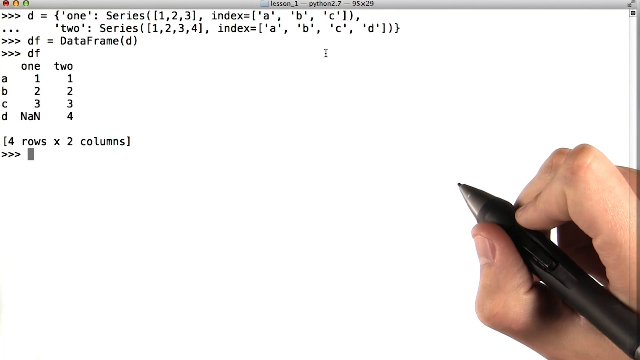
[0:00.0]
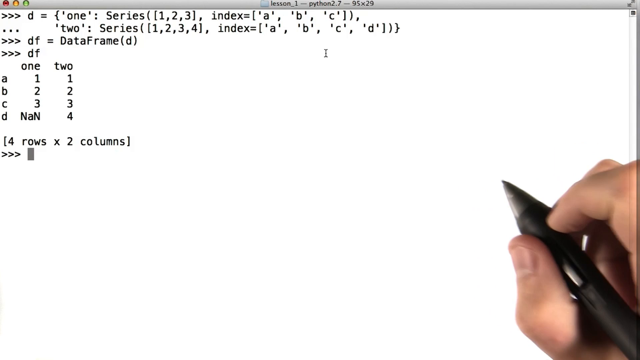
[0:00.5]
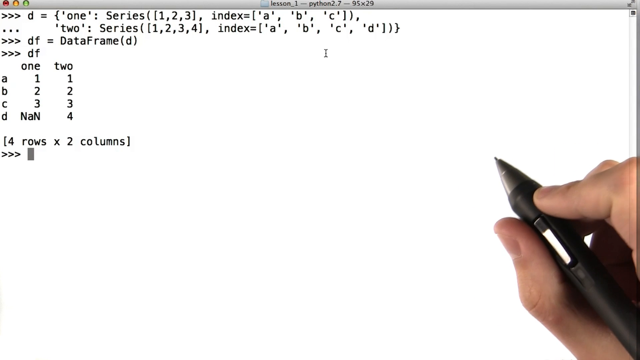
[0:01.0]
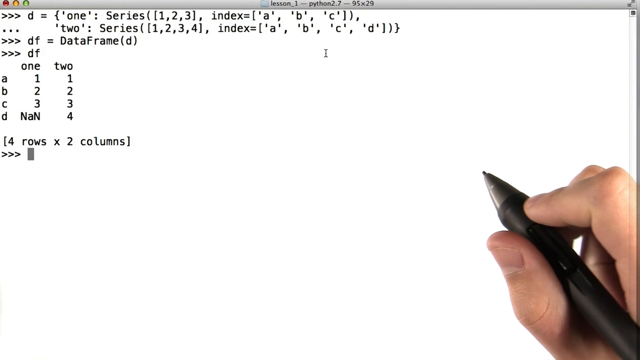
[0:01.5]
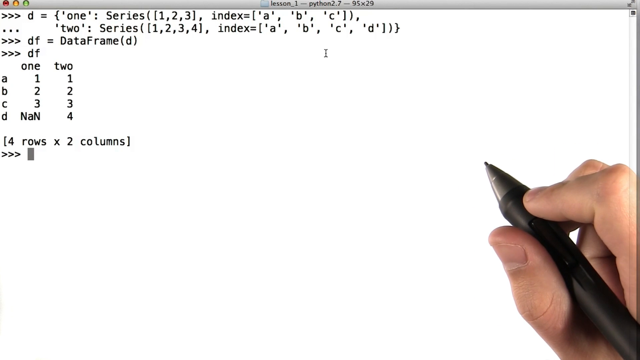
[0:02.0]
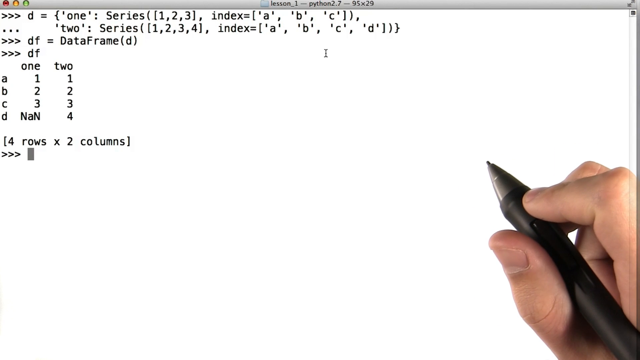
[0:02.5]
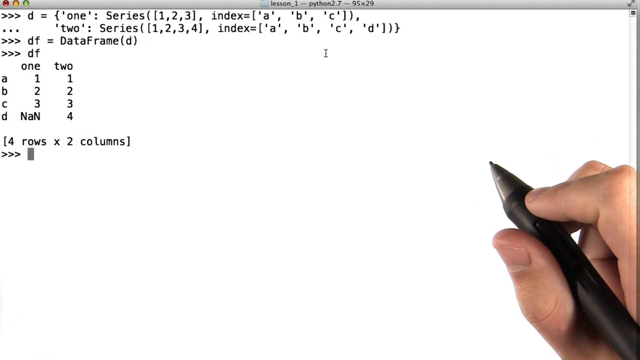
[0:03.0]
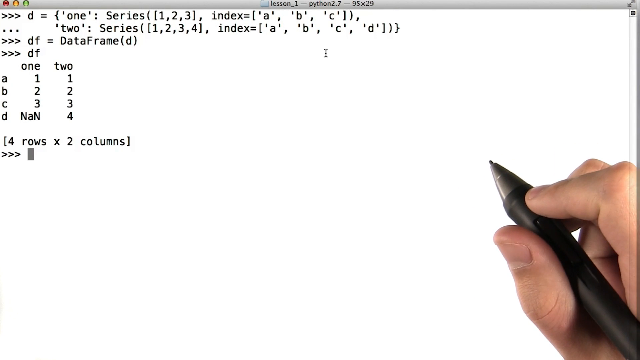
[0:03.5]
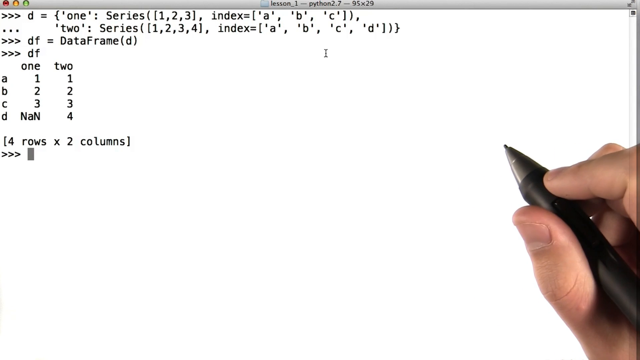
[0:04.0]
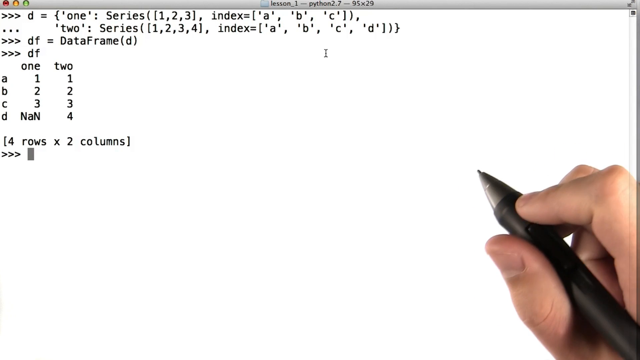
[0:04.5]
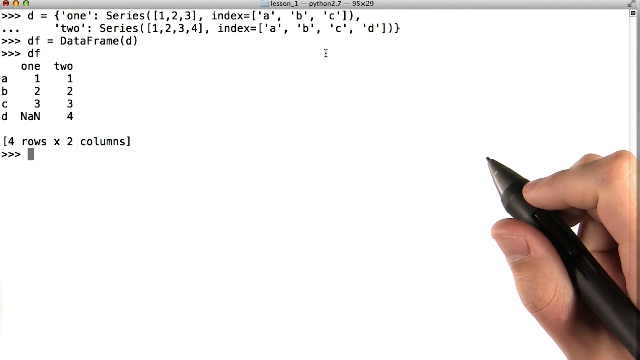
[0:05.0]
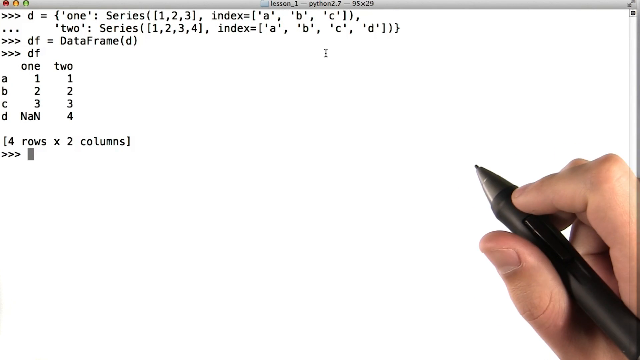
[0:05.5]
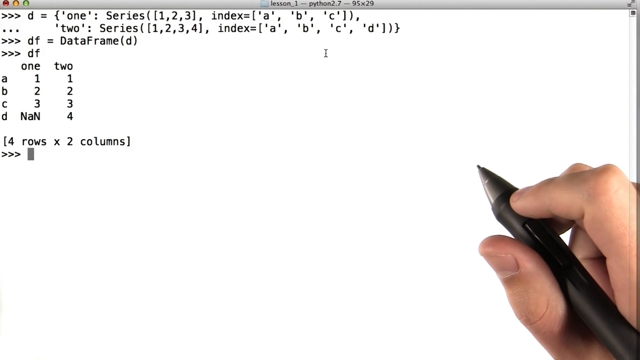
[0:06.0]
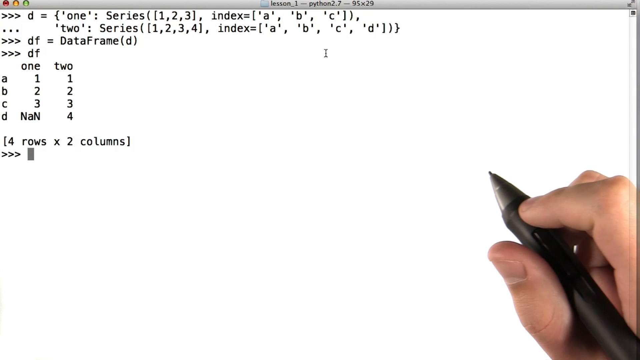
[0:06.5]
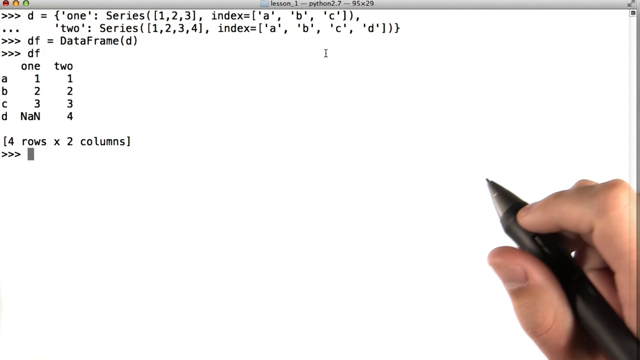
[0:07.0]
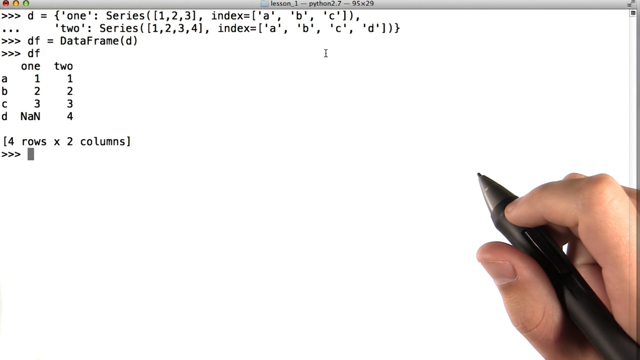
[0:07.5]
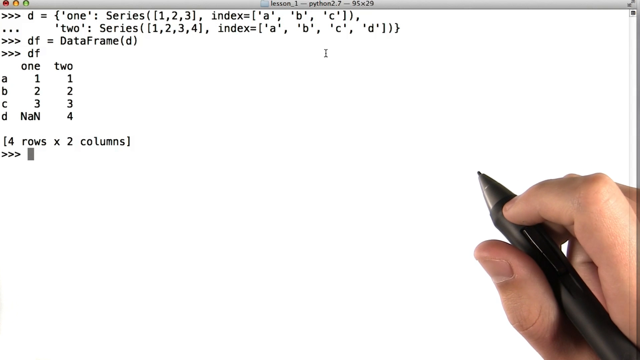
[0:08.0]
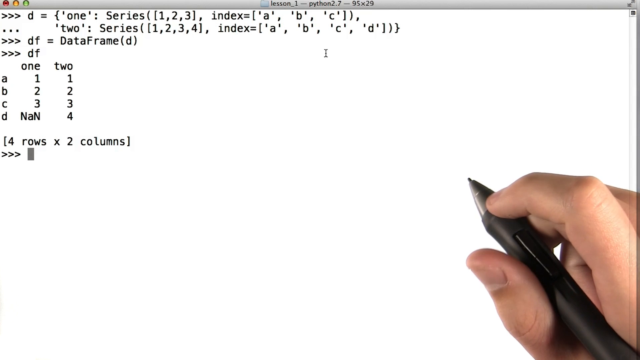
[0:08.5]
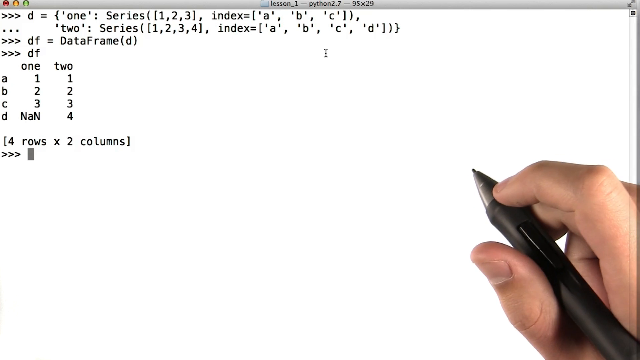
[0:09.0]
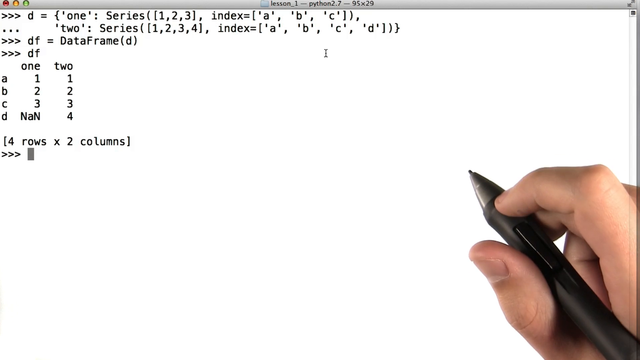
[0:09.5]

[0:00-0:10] A page is open with the title "Lesson 1, Python 2.7". Below it, code written in the Python language appears, including a line beginning "d =" followed by an open bracket. The page has a white background and the writing is in a black font. A white man's hand holds a black pen and tries to write, but nothing shows on the page.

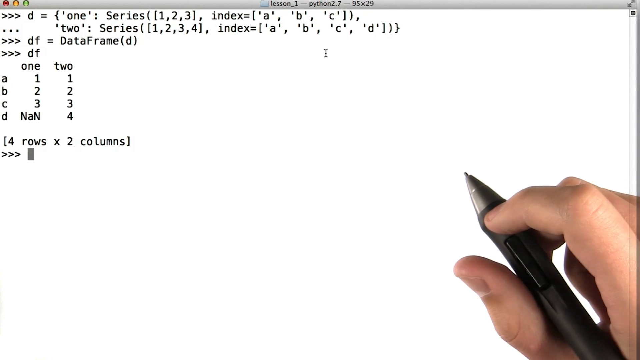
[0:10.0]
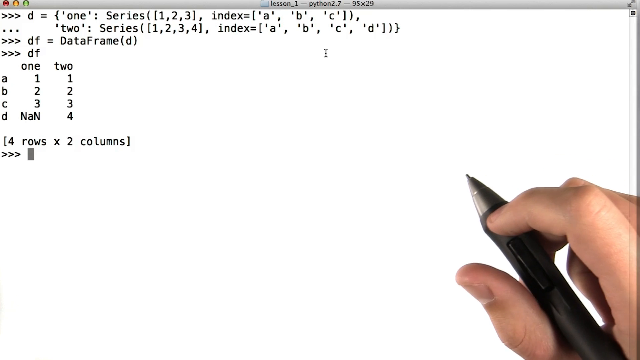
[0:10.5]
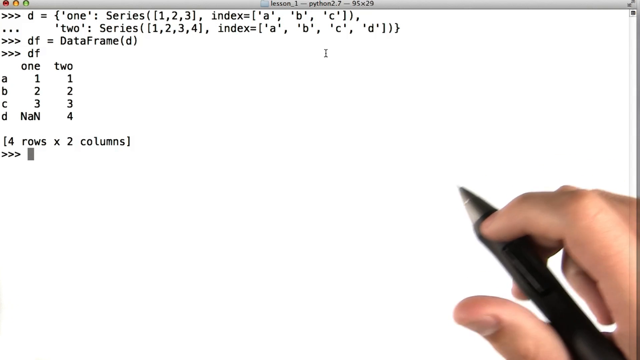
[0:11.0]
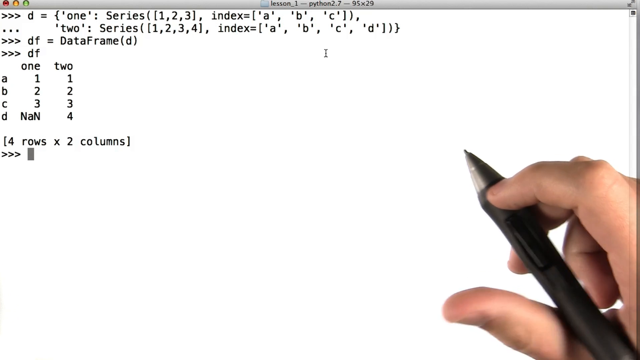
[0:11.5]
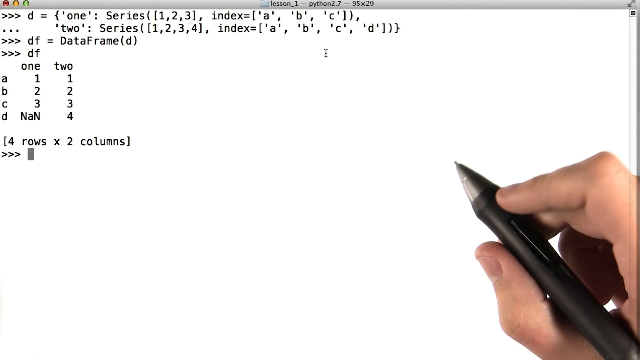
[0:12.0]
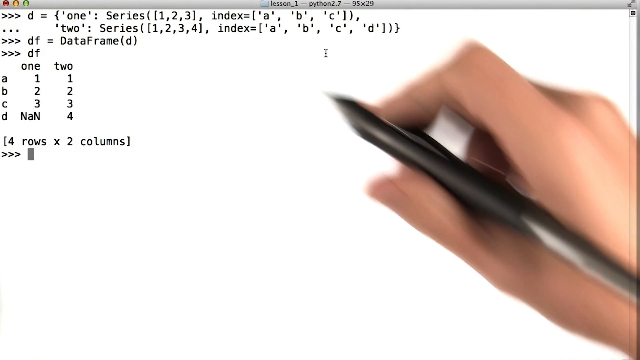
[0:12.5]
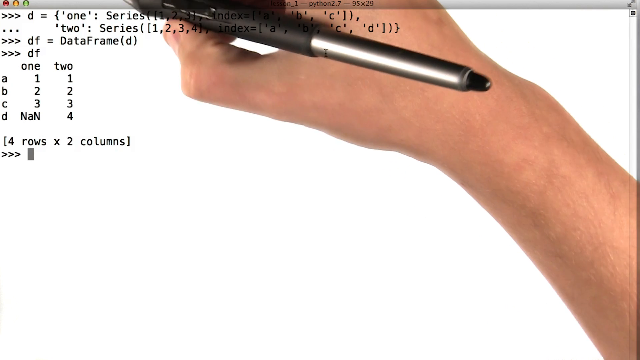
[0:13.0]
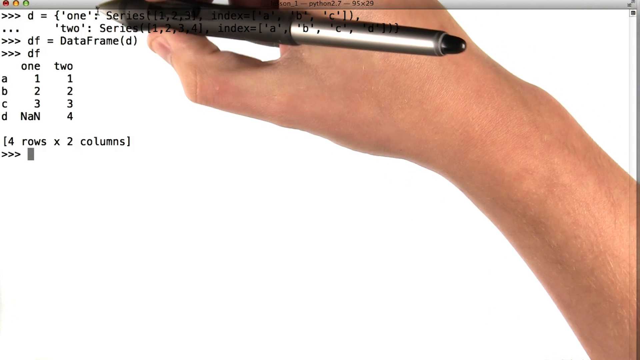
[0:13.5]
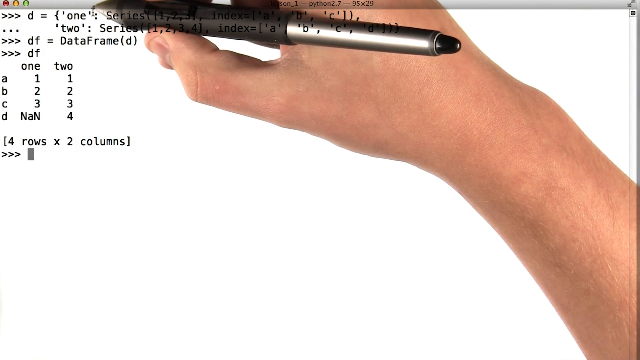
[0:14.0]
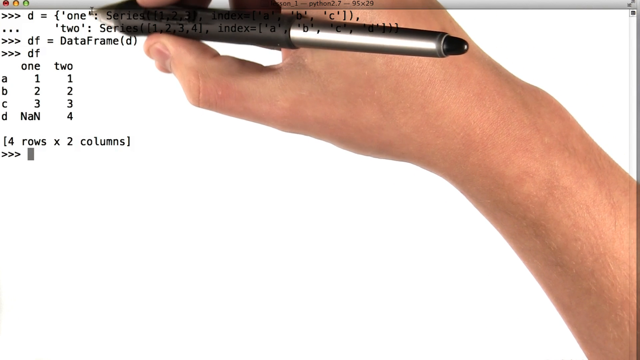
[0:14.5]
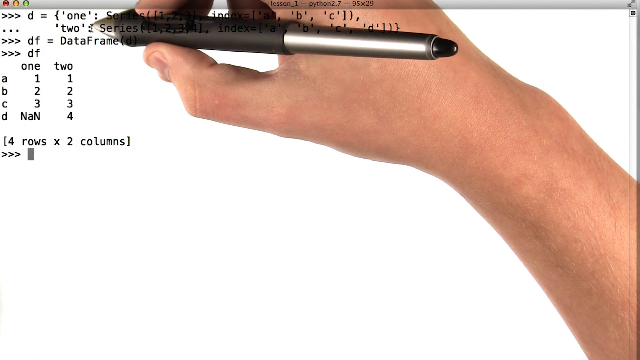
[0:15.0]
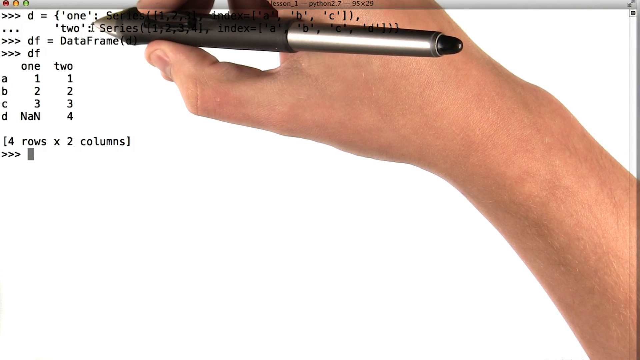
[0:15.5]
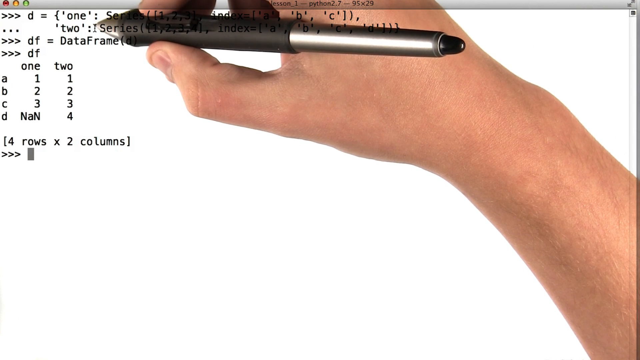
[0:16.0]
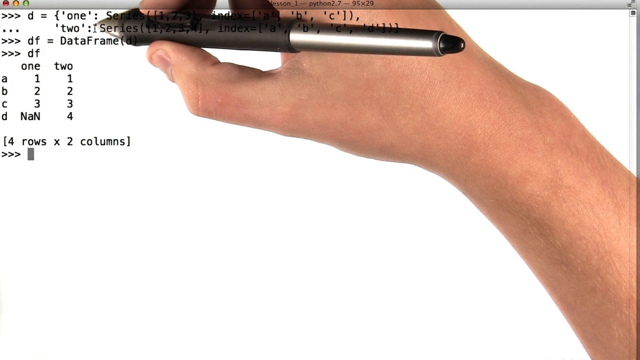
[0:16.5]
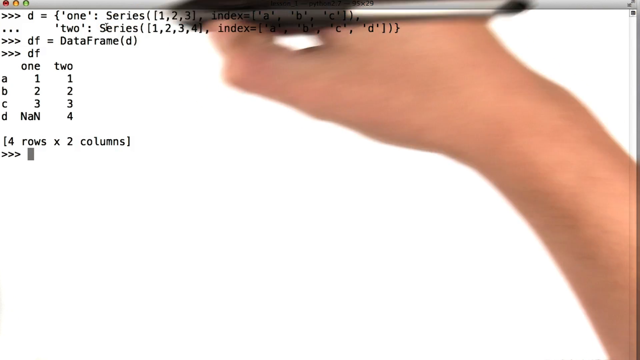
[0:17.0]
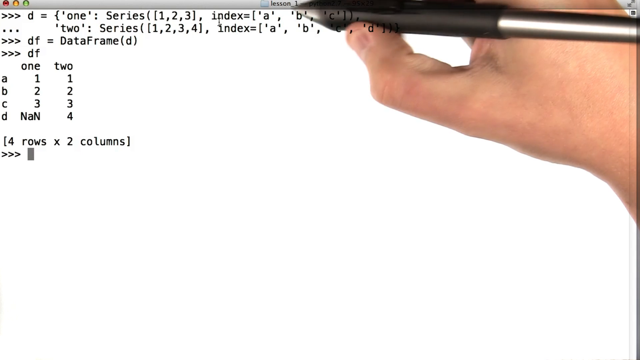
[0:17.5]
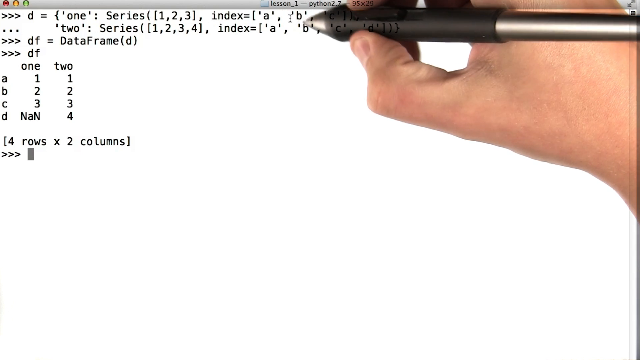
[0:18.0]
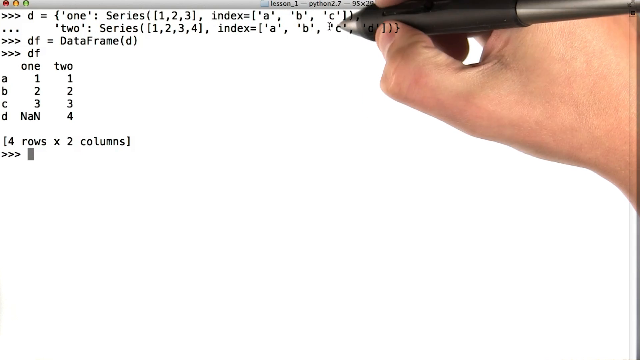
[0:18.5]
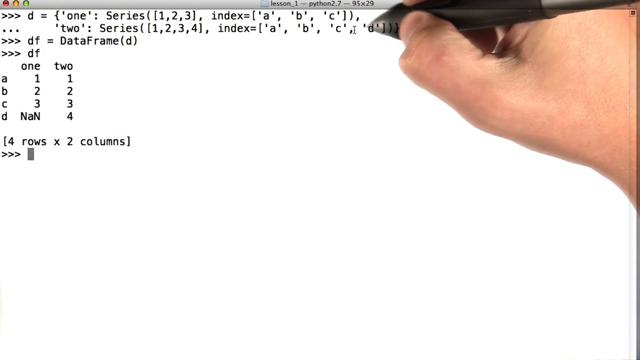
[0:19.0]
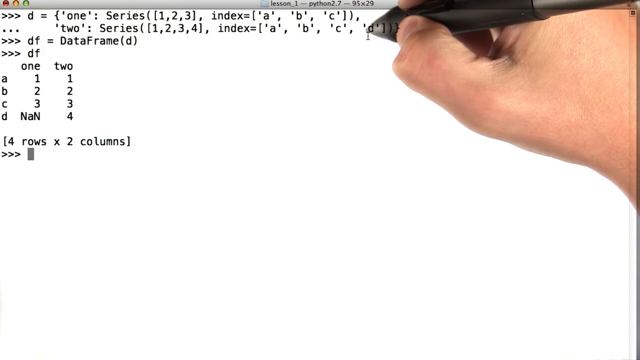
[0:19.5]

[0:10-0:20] The man's hand continues to move over the page. The pen is an electronic pen, and the white man's hand moves it through the code that is written. It is unclear what he is trying to do, but the pen has moved.